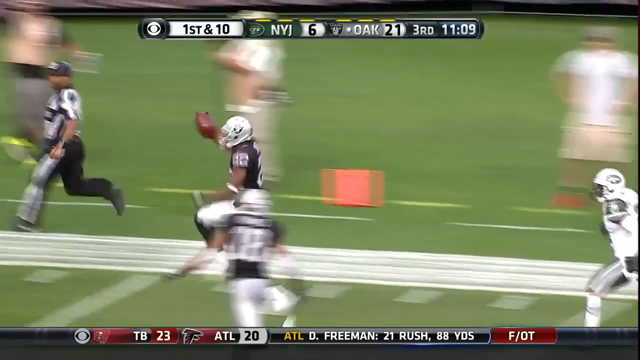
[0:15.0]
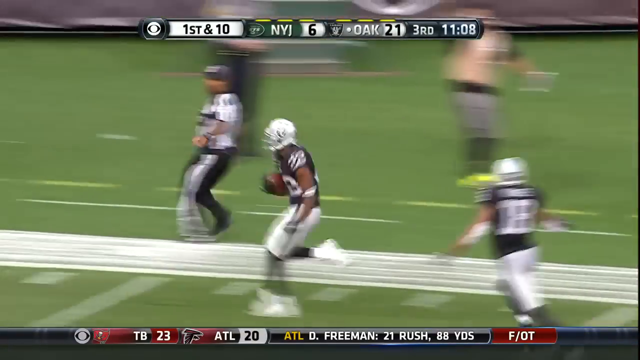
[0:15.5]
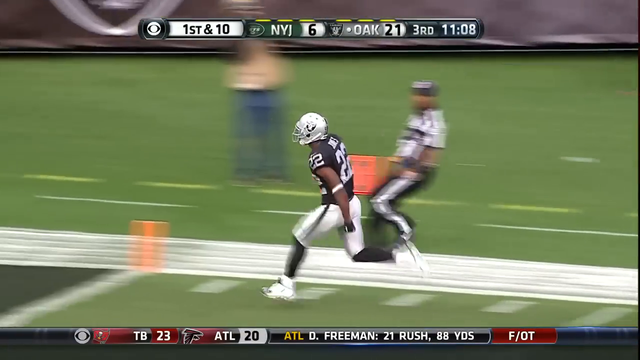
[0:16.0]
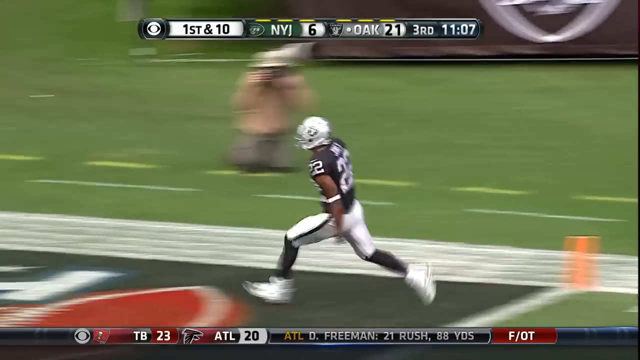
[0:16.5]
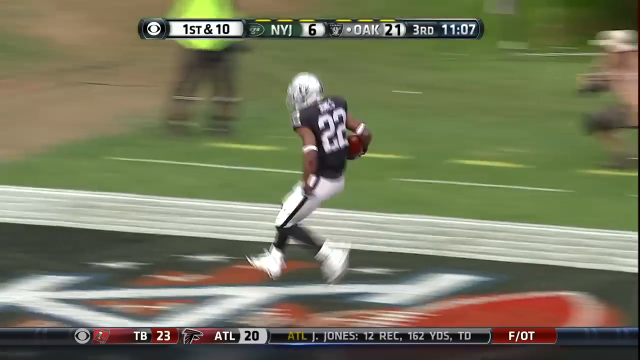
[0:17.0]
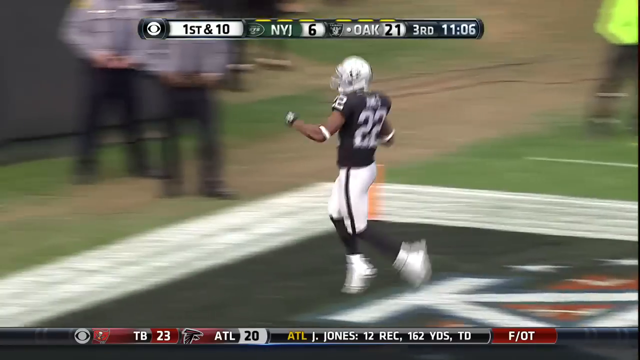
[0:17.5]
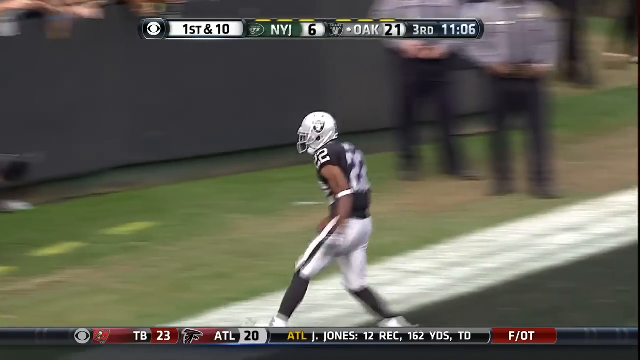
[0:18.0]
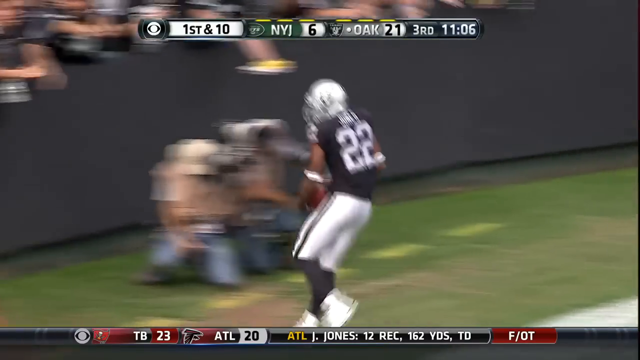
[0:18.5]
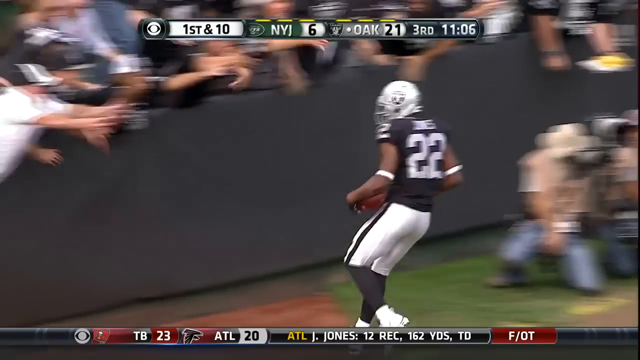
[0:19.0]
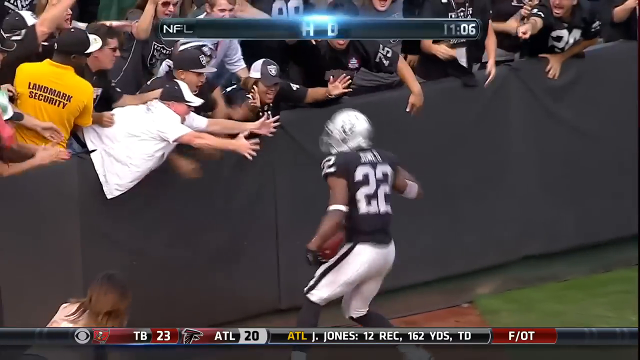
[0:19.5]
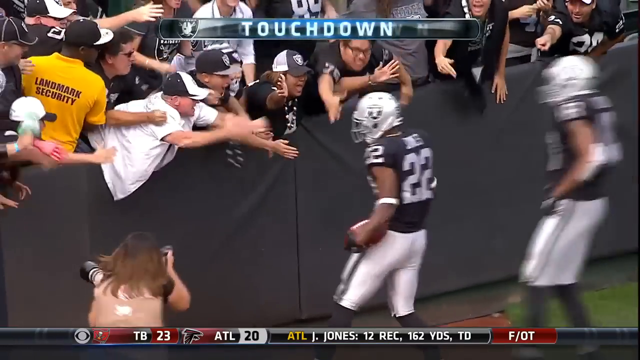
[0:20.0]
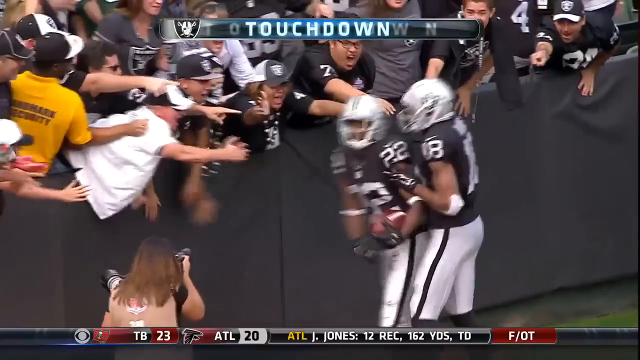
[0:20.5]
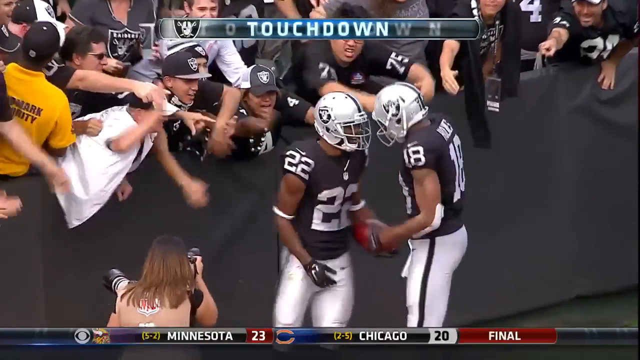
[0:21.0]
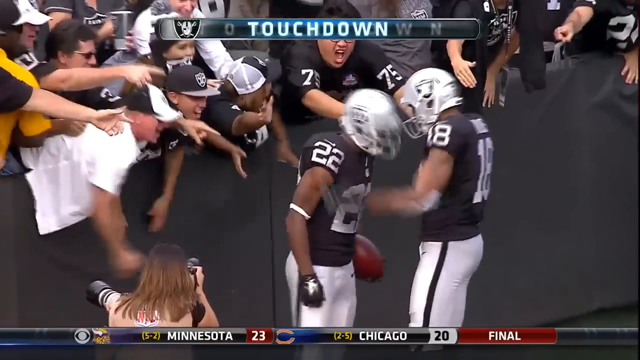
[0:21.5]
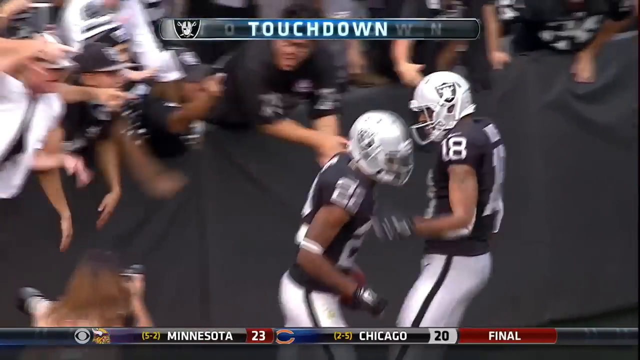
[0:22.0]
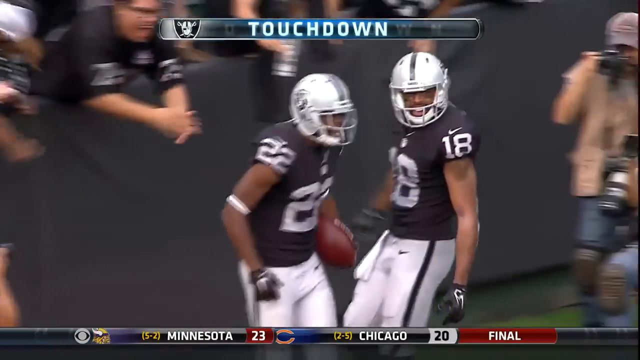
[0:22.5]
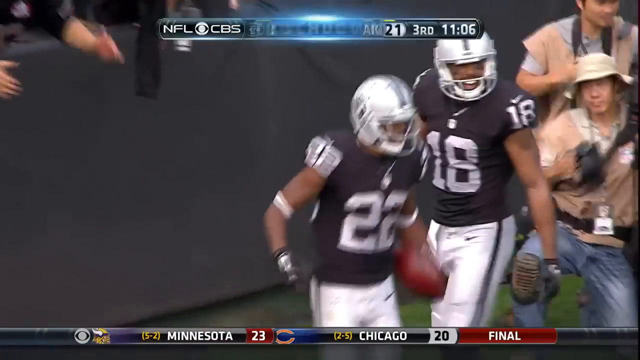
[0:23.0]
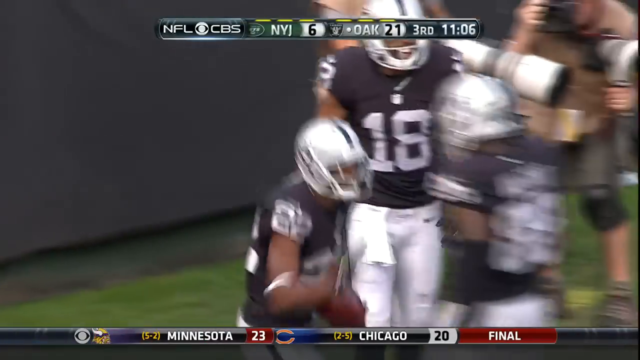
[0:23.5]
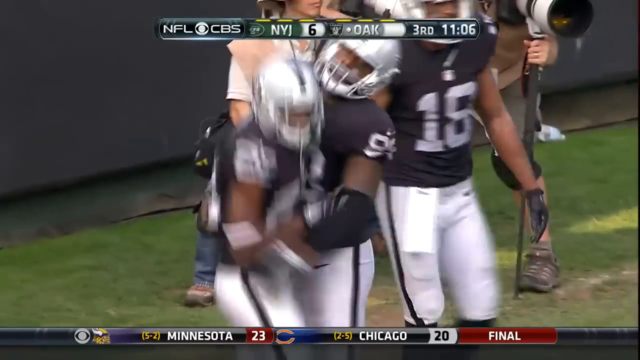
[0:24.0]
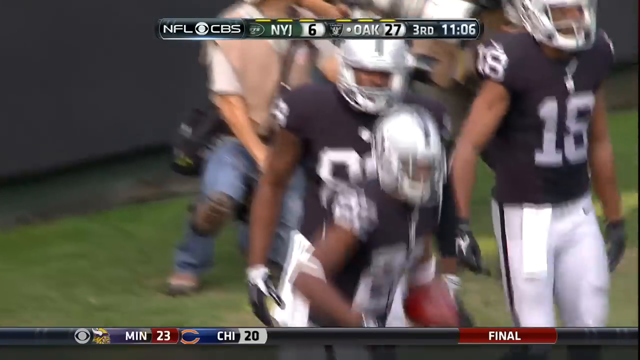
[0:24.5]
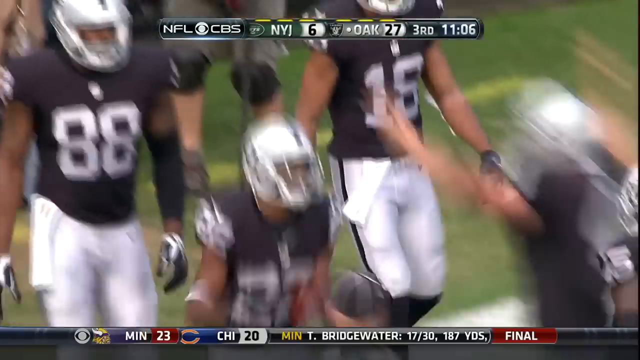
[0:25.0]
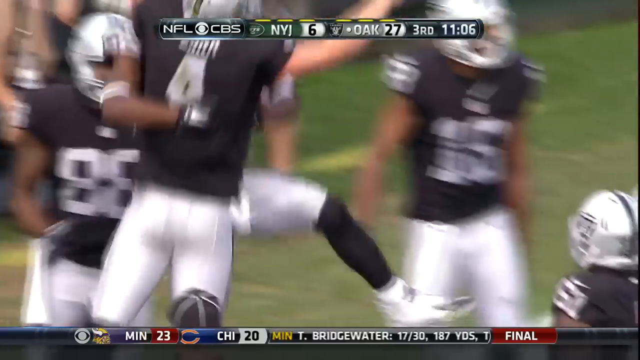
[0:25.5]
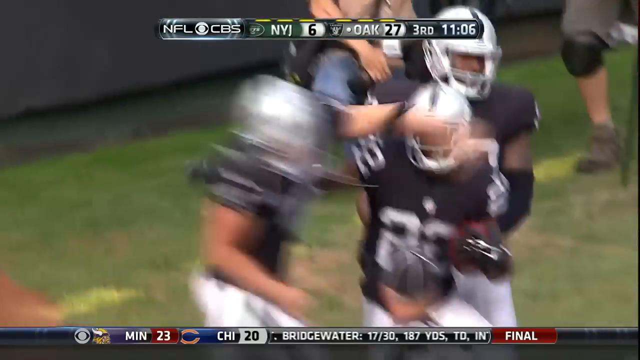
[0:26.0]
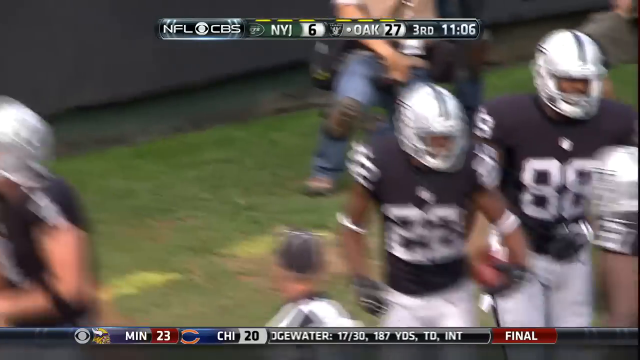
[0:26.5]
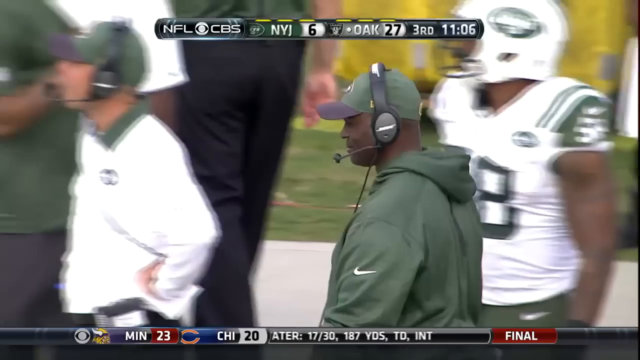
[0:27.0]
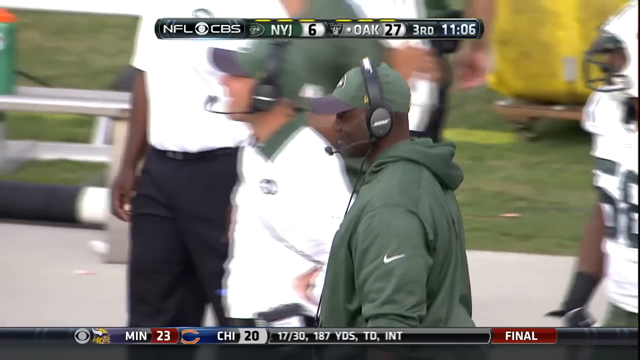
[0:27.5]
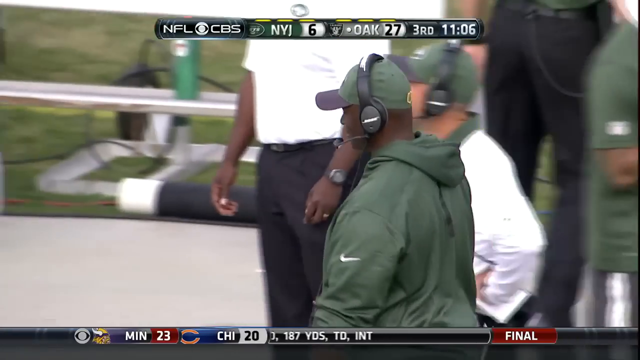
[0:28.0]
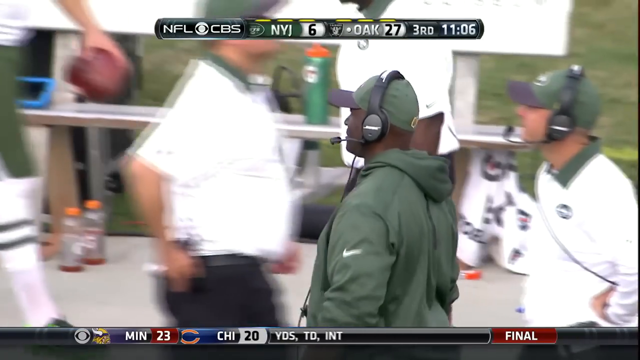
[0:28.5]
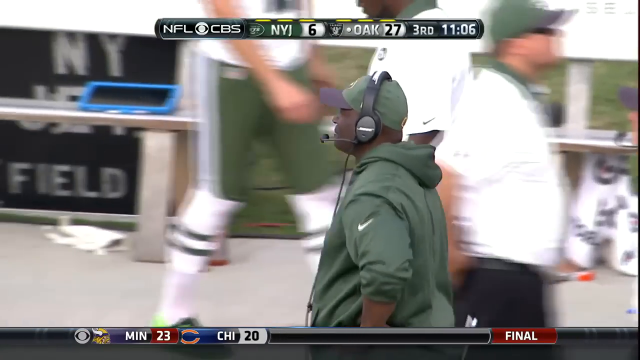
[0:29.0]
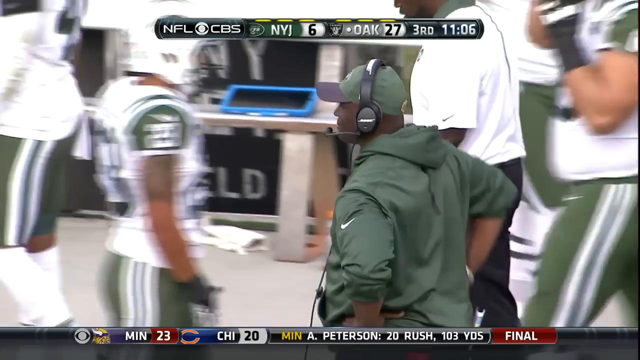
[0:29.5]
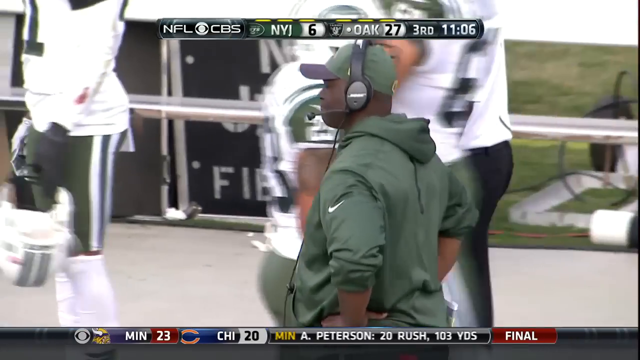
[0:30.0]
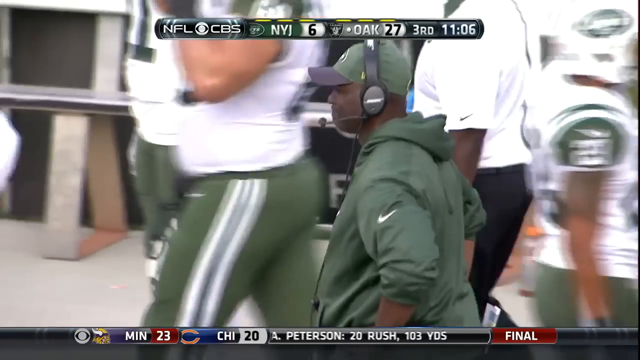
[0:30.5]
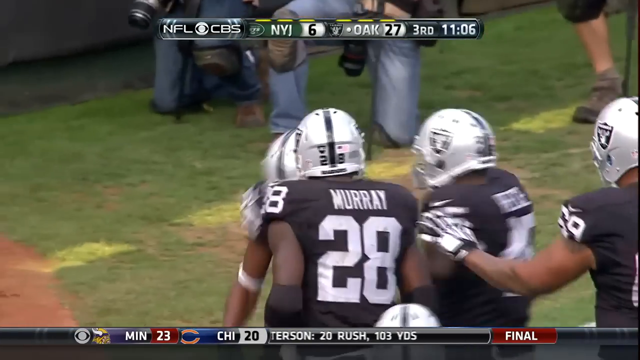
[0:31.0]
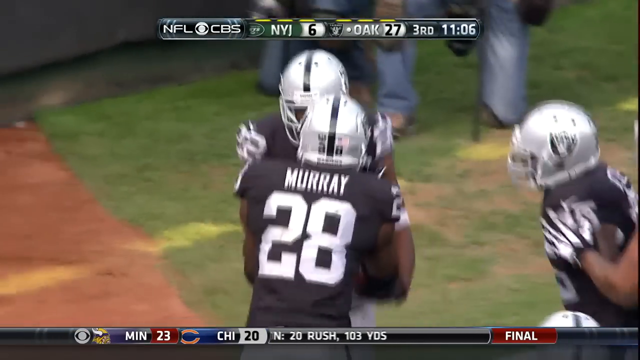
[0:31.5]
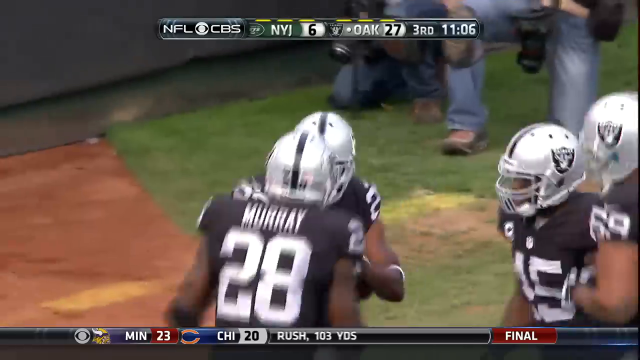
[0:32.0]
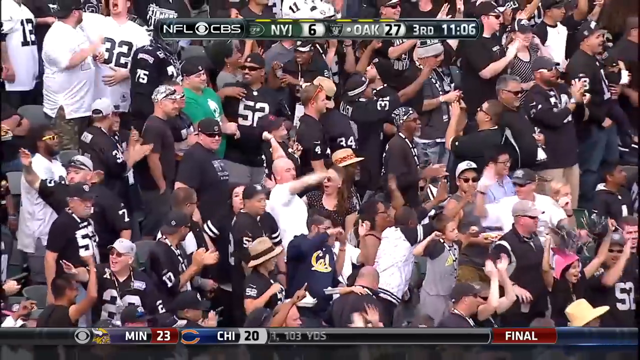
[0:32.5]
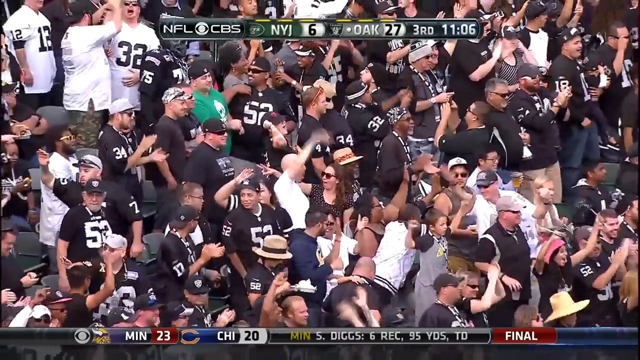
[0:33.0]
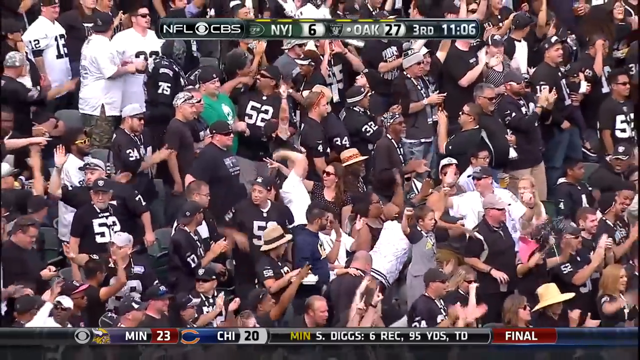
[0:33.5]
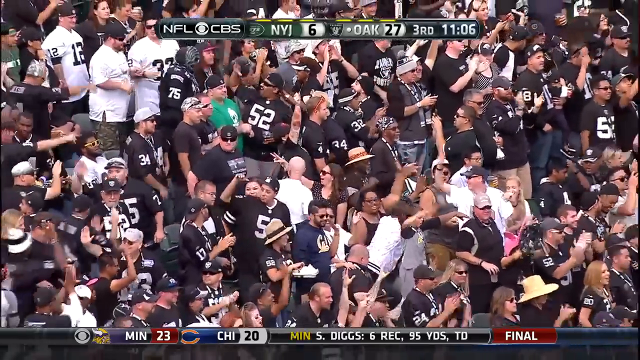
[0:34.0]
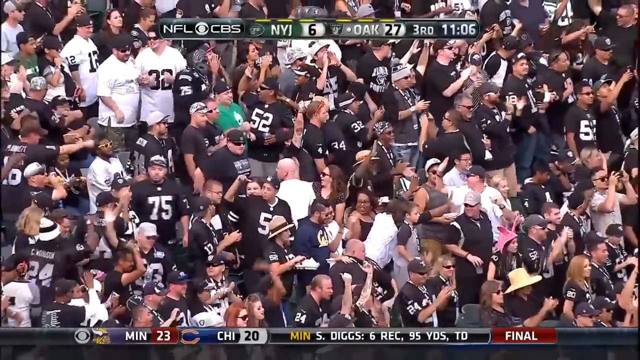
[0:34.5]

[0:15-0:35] Taiwan Jones of the Las Vegas Raiders sticks the football out as he gallops all the way into the end zone, with one of his teammates behind him, and steps on the logo. A bunch of fans try to get a high-five from him, and he high-fives one of them. Number 18 gives him a headbutt and slaps him on the head, and all his teammates come to congratulate him. Carr jumps up in the air and gives him a high-five. Another coach, probably the defensive coordinator, does not look happy: he crosses his arms, his face looks grim, and his lips are pulled to the side. Number 28, Murray, congratulates Taiwan Jones. The Oakland Raiders fans look very happy, all with their palms in the air.